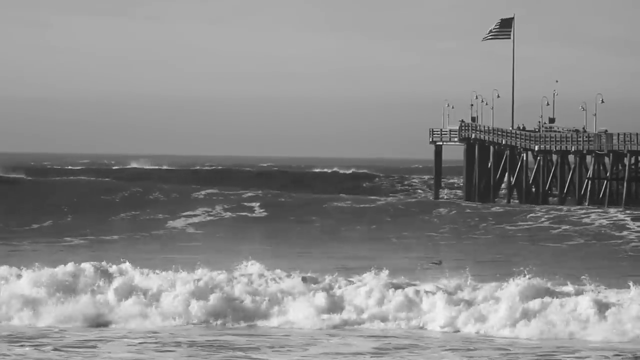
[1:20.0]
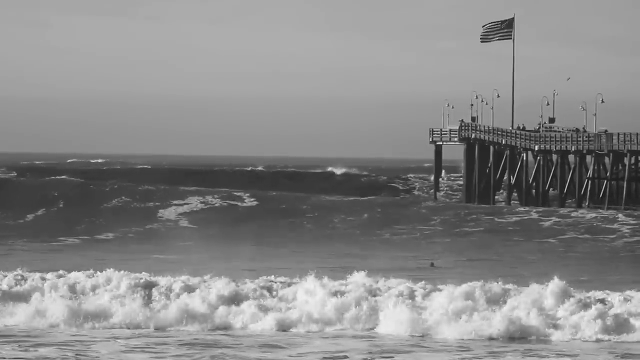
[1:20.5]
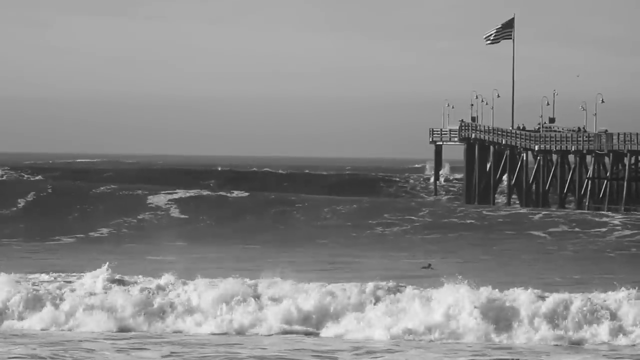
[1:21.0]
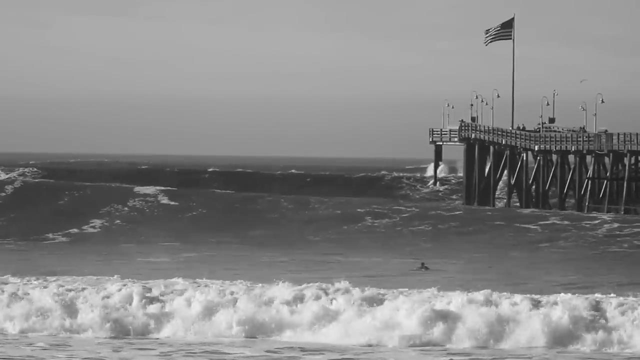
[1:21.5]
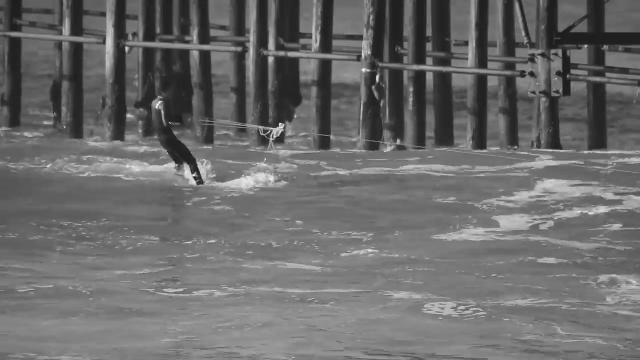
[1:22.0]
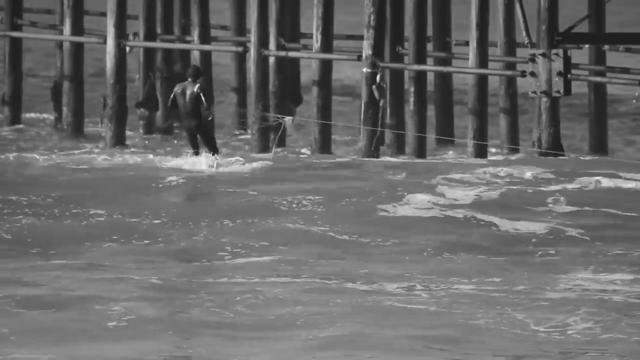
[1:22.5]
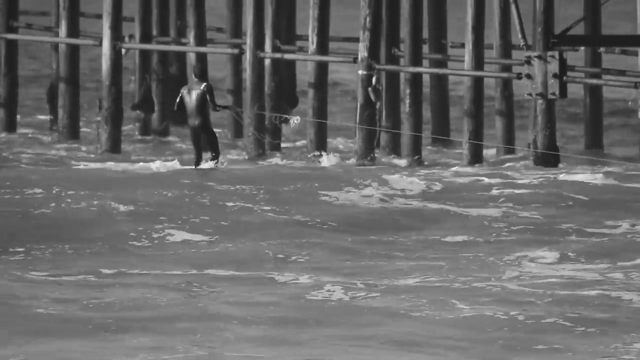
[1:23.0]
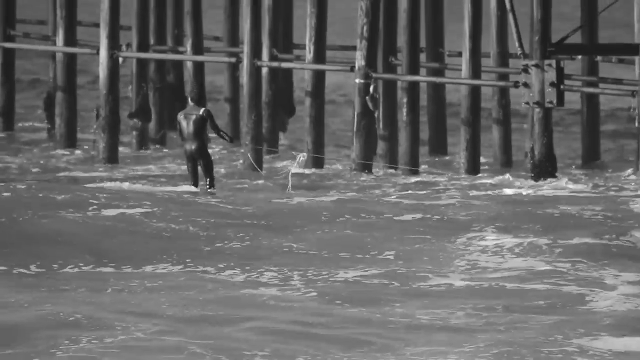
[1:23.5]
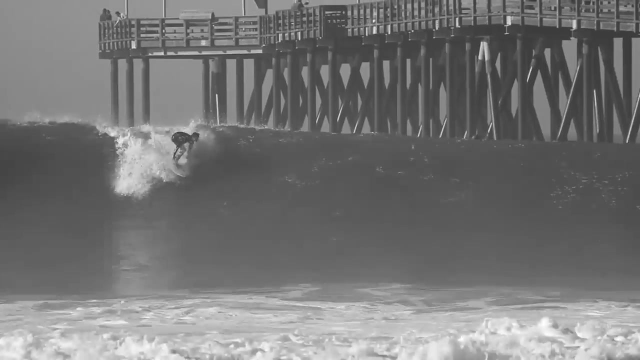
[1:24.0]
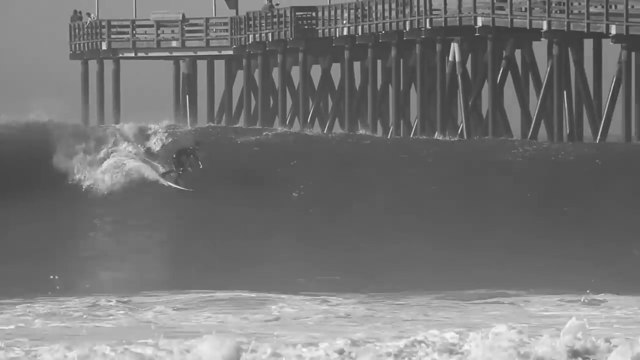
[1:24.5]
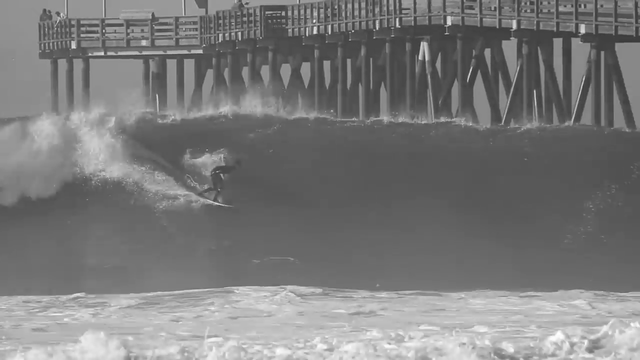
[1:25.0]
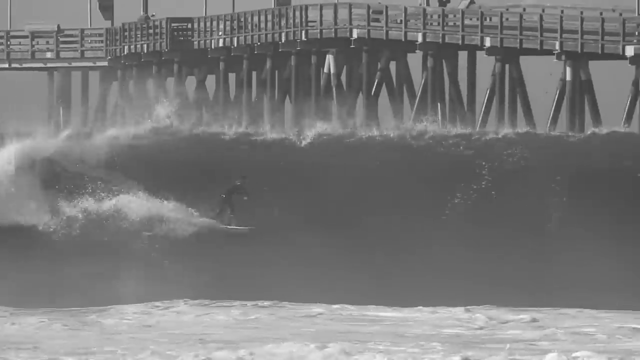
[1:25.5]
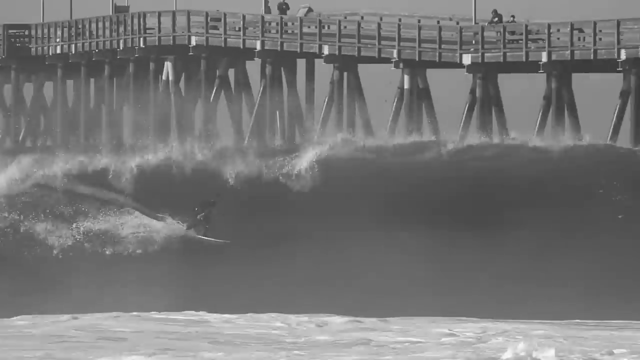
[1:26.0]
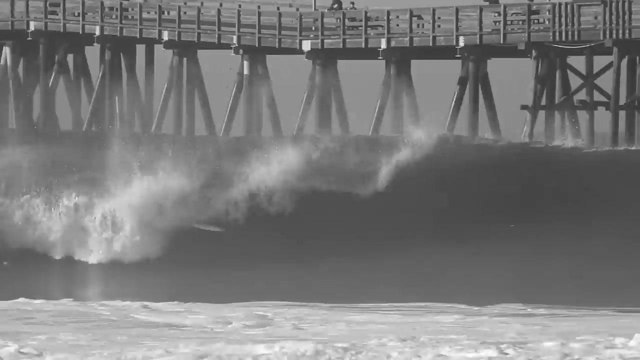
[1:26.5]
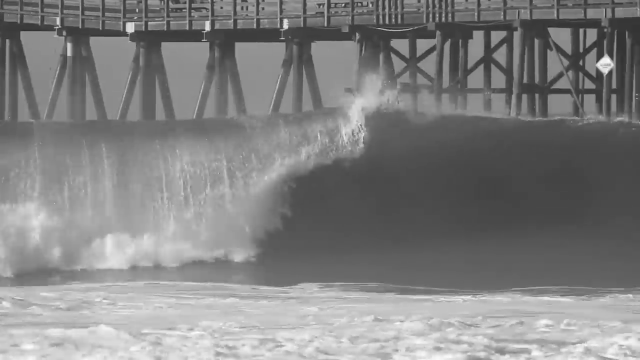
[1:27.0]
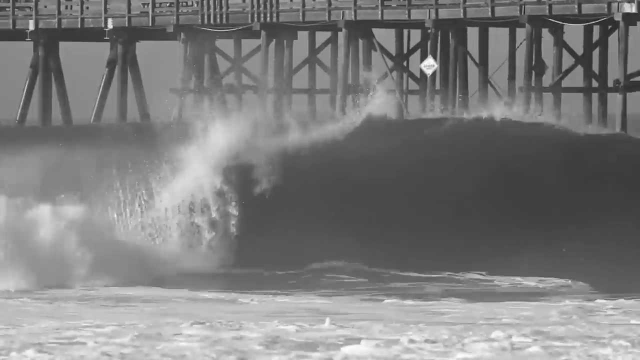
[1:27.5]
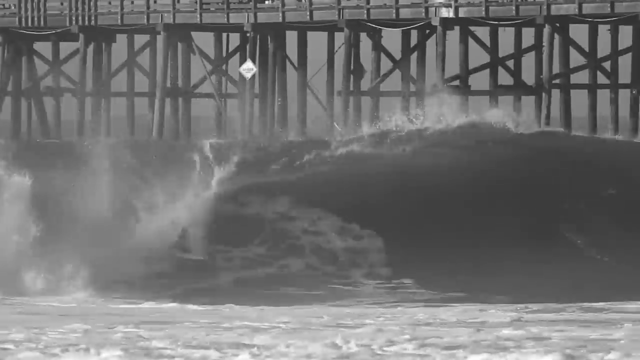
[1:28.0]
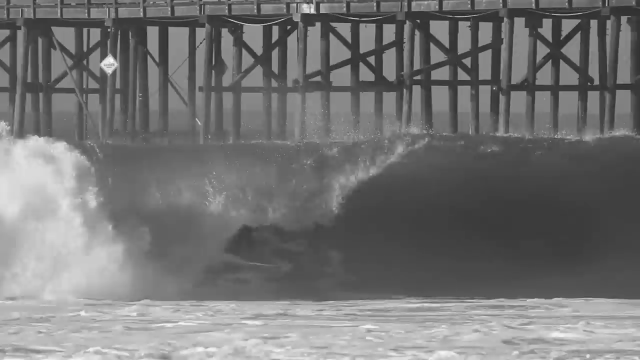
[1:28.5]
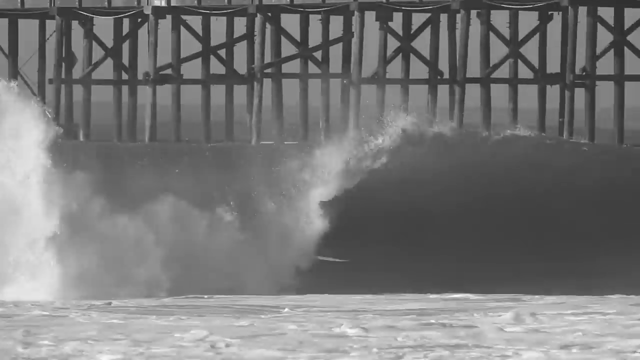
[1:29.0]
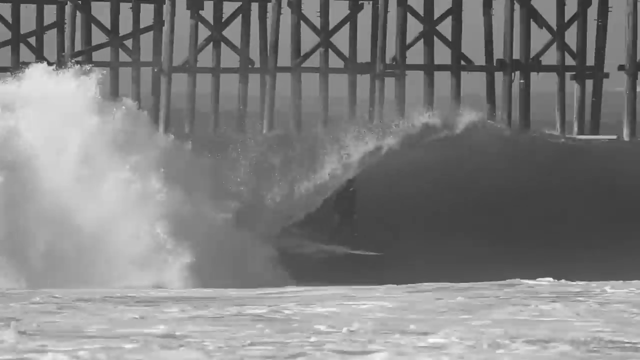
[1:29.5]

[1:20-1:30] The ocean, a pier, and people riding surfboards out in the water are shown. The pier is on the right and has a large American flag; the pole holding the flag is about 50 feet tall and the flag is very large, probably 10 feet long. There are light poles on the pier, and the waves coming into shore are about 12 to 15 feet tall. A surfer rides out toward them, and for a brief second a surfer is seen holding on to some kind of rope attached to the pier or to something else. Then a man rides down the face of a wave about 15 to 20 feet tall, cutting from left to right on an angle, gets in the curl of the wave, rides the tube, and shoots out at the end standing upright.